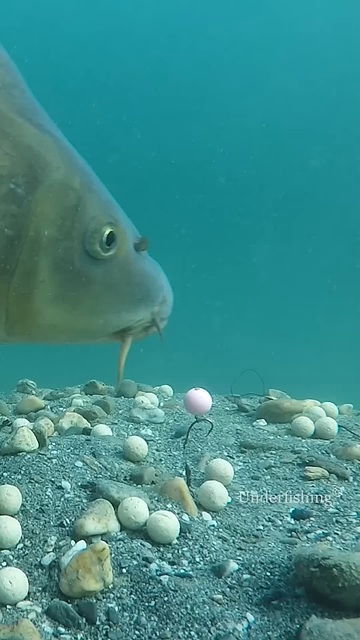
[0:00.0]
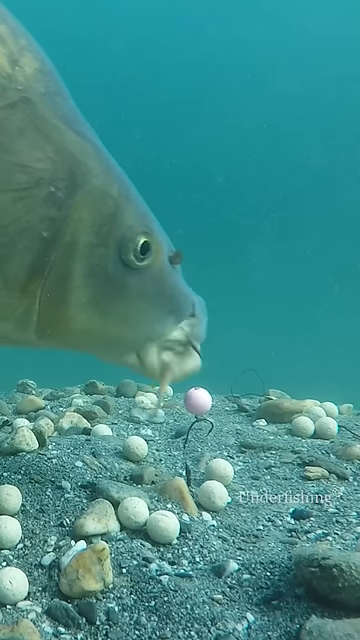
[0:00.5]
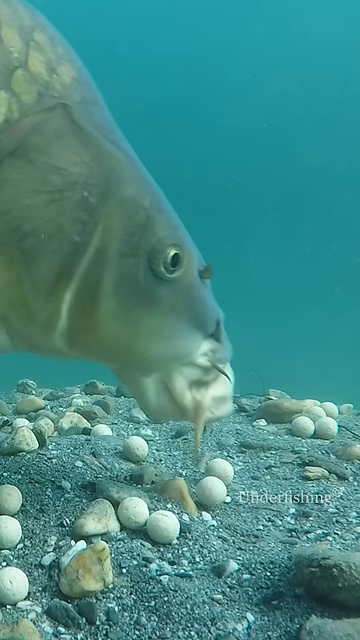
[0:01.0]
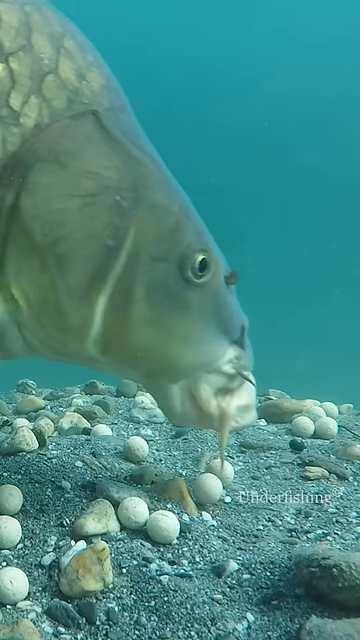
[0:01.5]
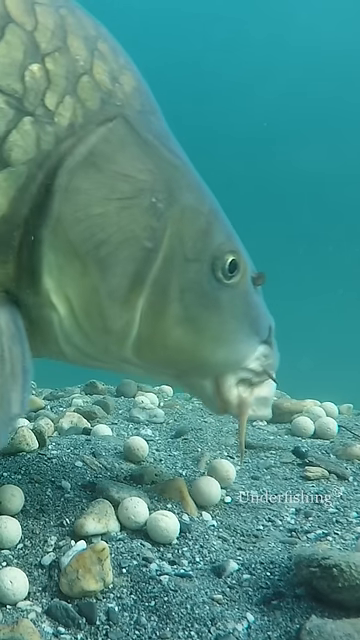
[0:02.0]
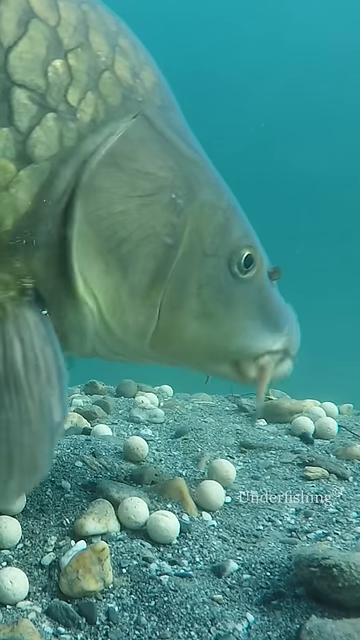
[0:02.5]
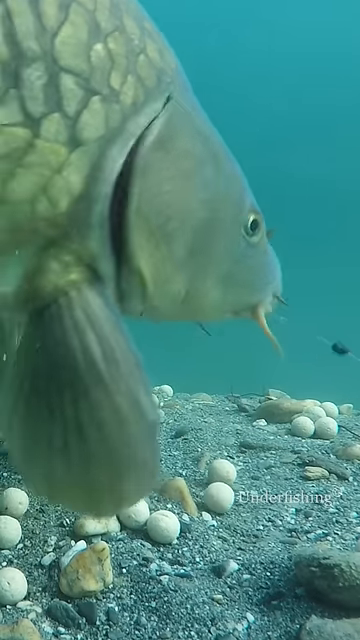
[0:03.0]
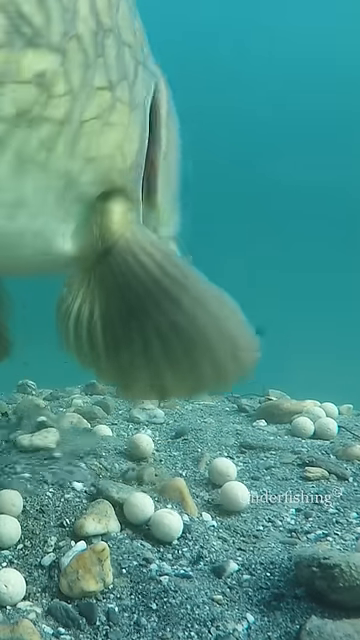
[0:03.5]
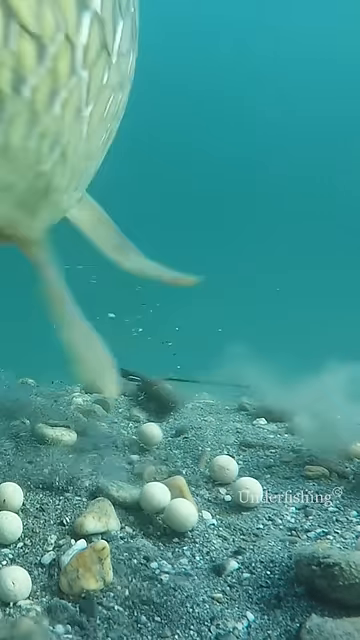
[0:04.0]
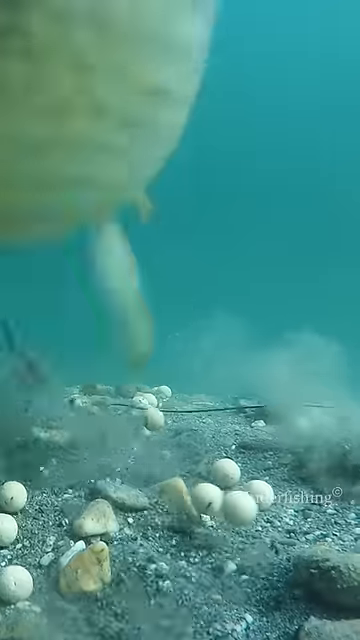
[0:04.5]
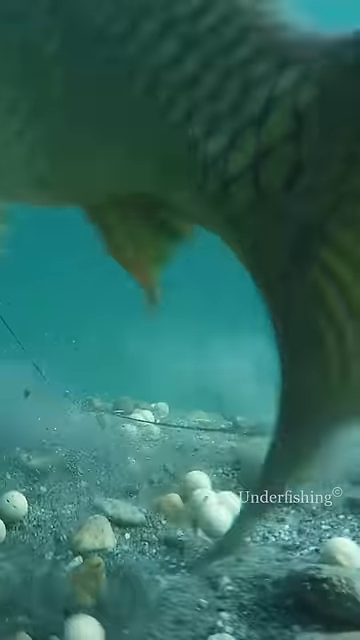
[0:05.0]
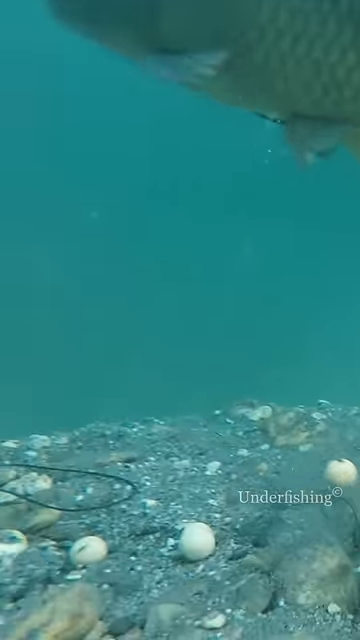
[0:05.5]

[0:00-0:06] In slow motion, a carp underwater bites at something pink that appears out of place. When the carp bites it, the pink object looks like it is attached to something else and pulls, and a wire can be seen being pulled. As the fish swims away, its tail seemingly hits the camera, and the camera goes spinning a little bit. The title of the video says "carp take with our underwater camera"; apparently the fish takes the underwater camera and knocks it off. There are a bunch of rocks and dirt along the floor, with blue water in the background. When the object moves, a bunch of dust kicks up and the rocks move. The carp is a pretty big fish.